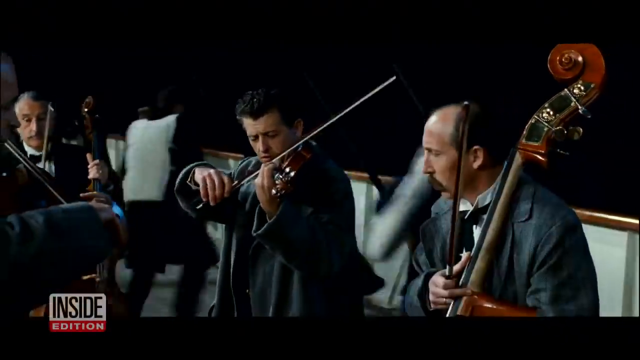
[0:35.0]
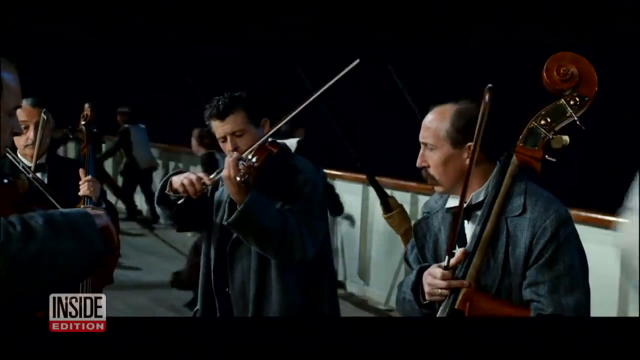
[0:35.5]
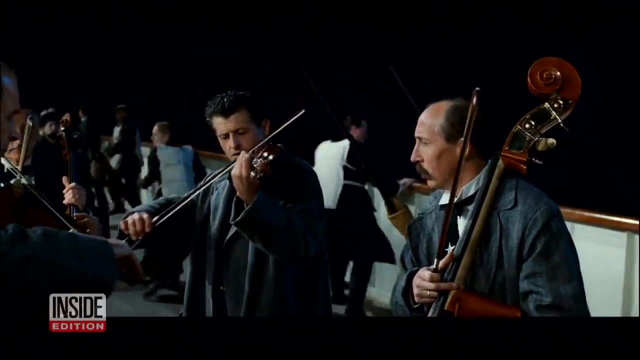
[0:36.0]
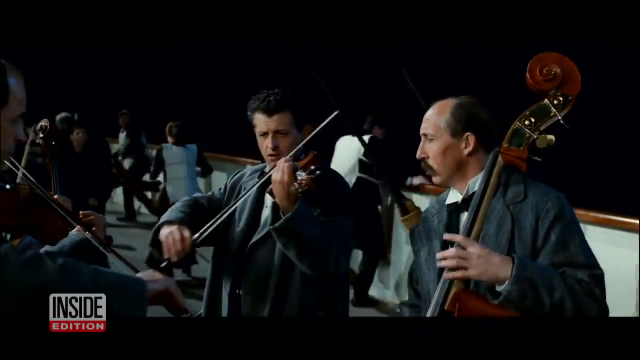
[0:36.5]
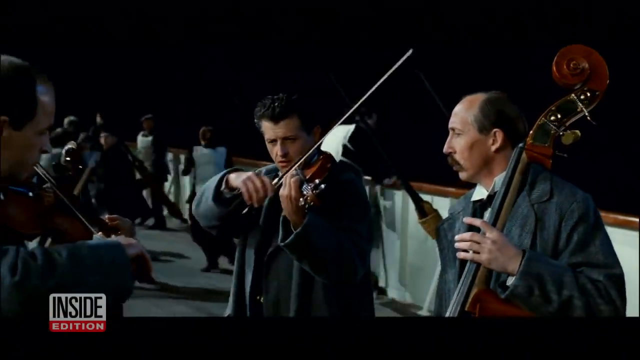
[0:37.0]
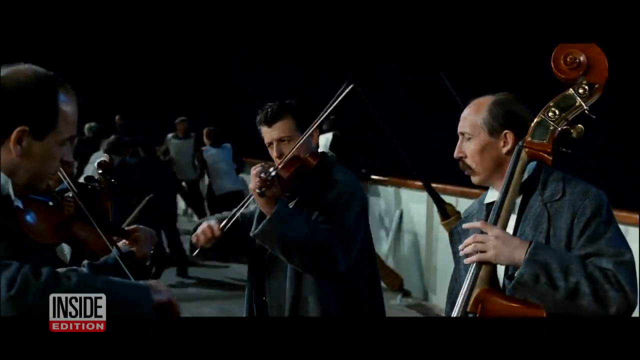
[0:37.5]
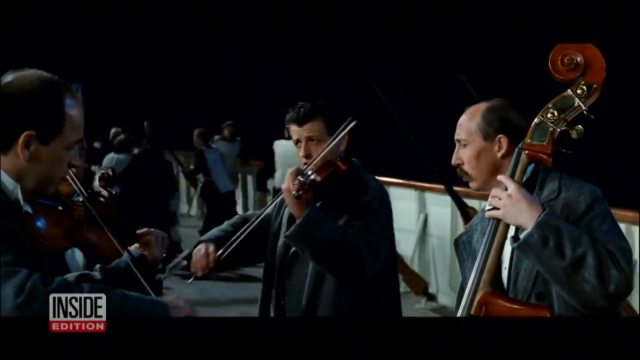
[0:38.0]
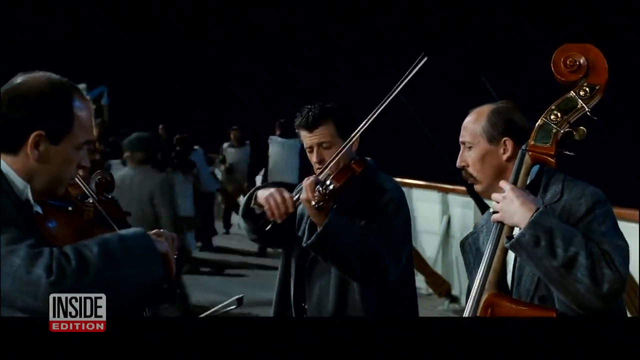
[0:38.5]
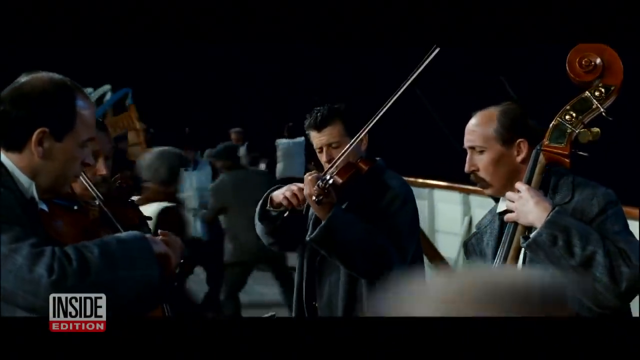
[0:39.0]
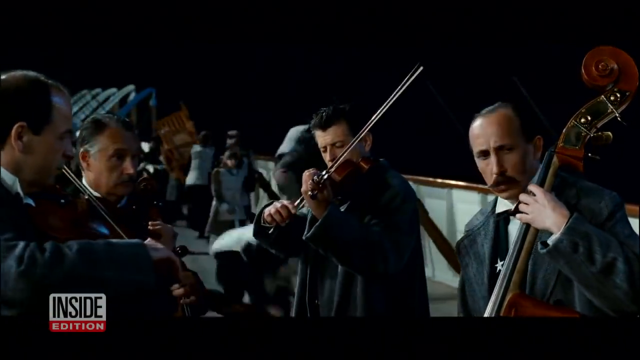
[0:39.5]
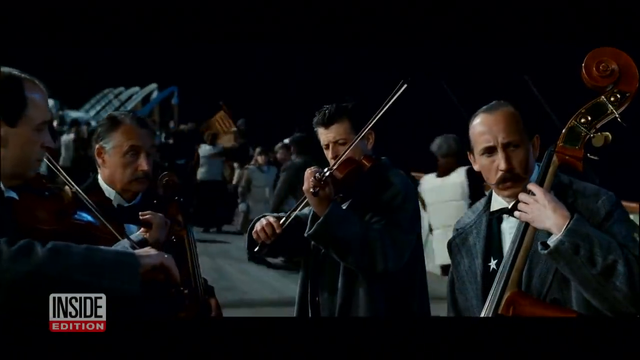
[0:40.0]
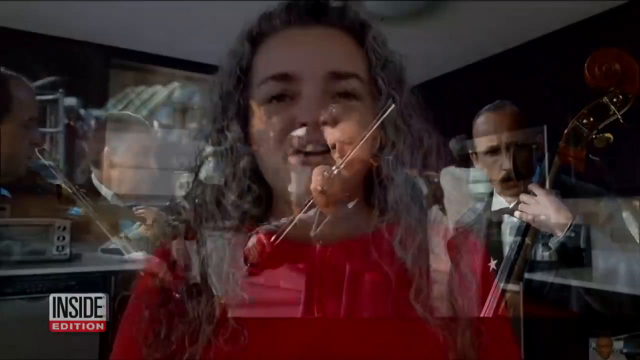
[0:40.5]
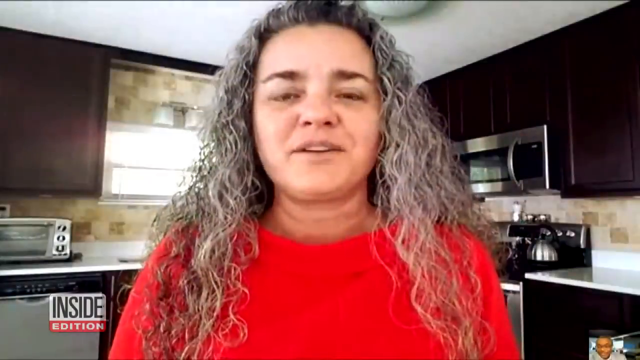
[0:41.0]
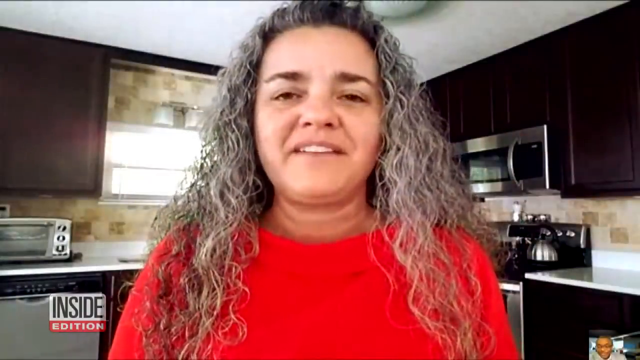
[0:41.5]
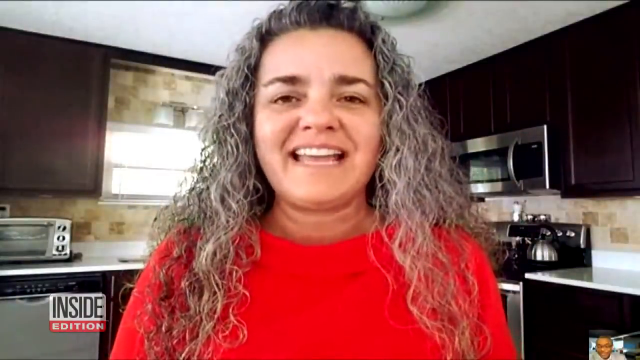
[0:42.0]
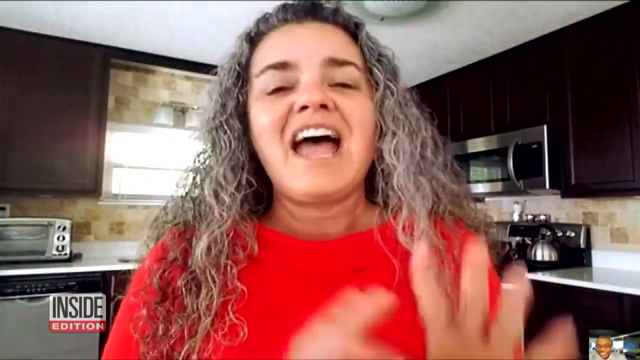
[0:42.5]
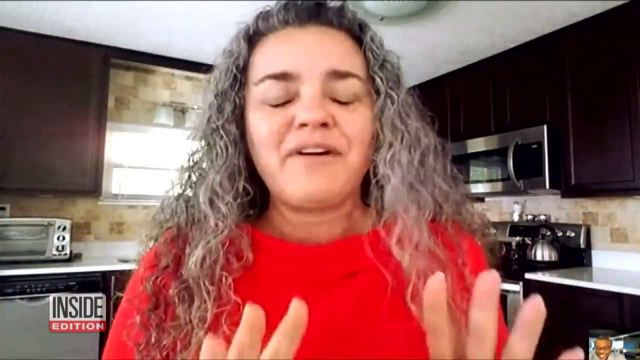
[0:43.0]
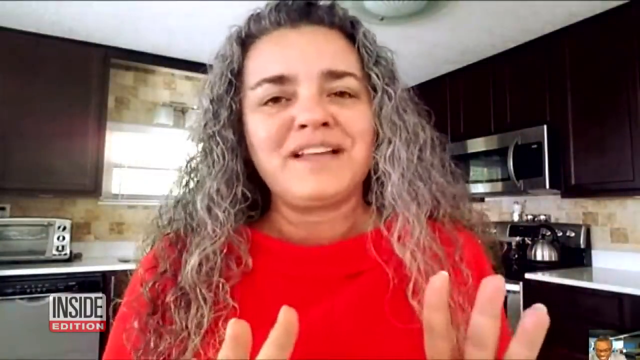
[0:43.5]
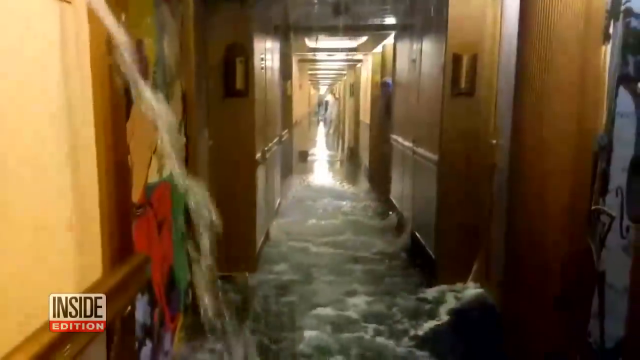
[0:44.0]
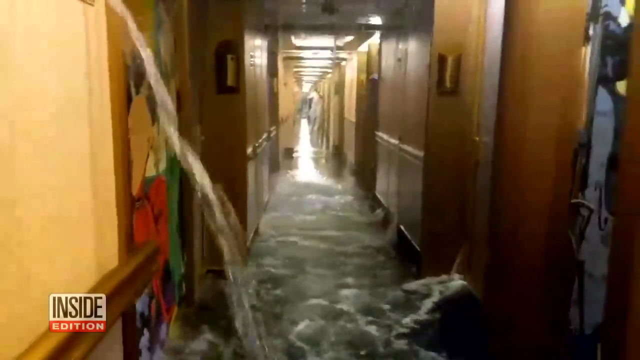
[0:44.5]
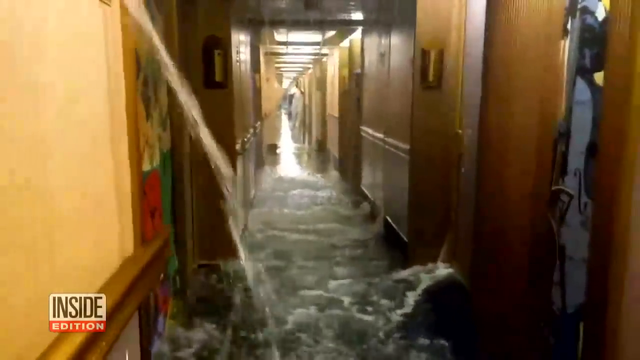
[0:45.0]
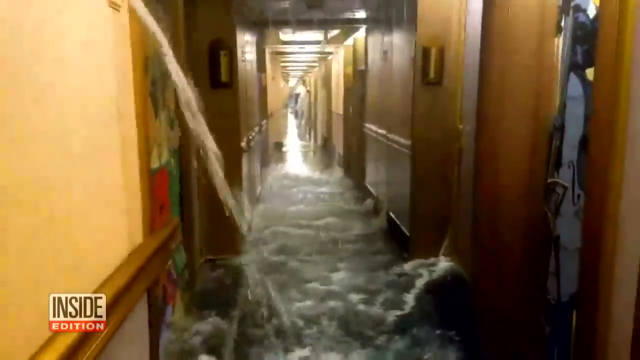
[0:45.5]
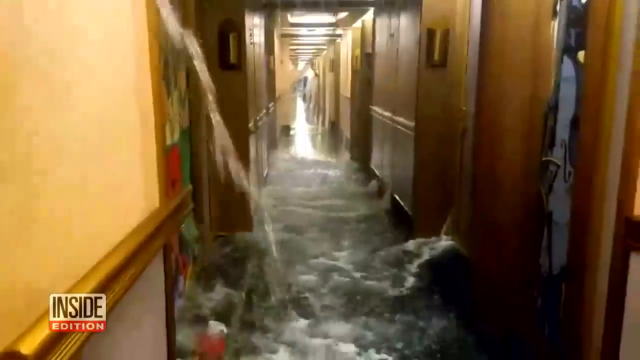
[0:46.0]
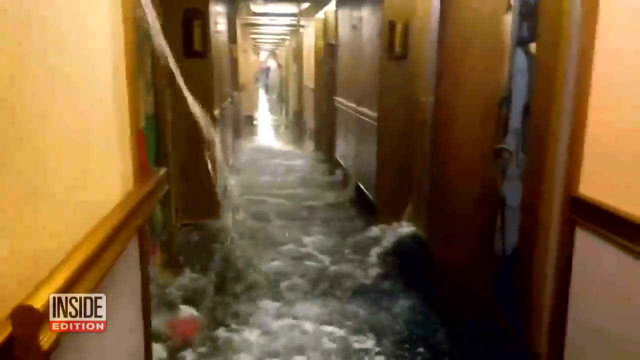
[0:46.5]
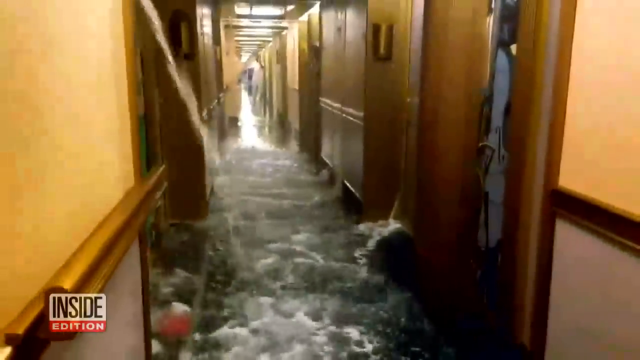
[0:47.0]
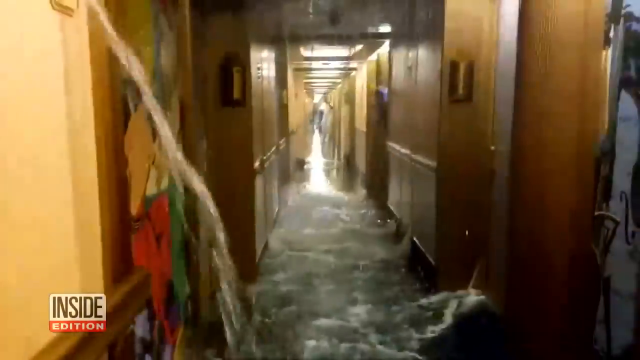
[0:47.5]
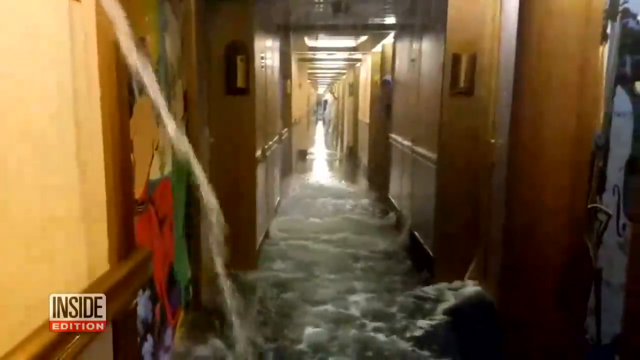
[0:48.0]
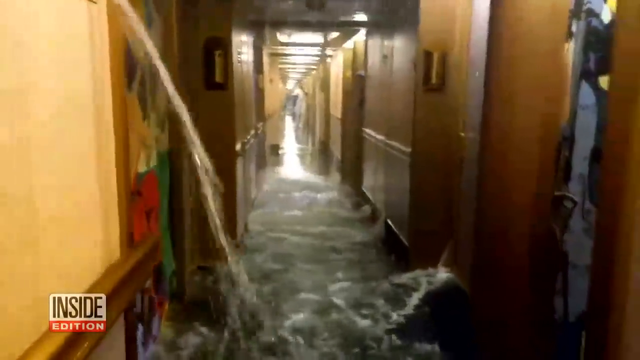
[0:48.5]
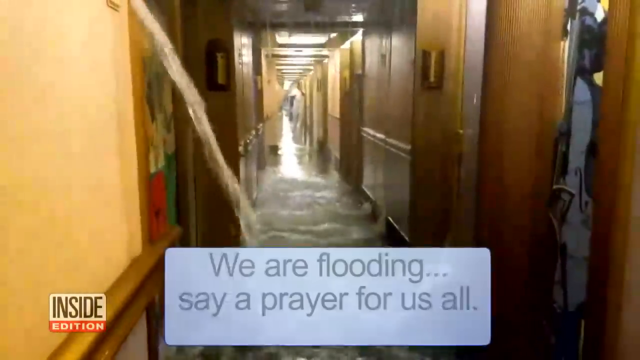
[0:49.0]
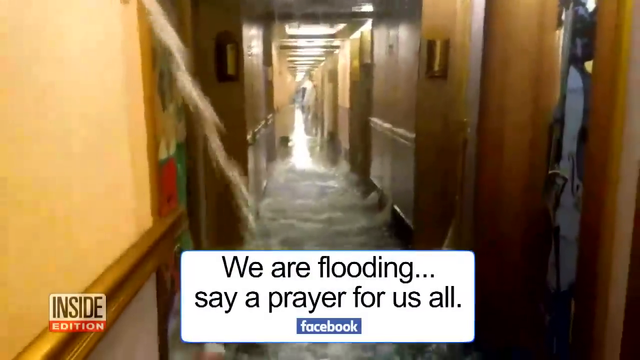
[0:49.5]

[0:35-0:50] More shots show the individuals playing the violin and the actors in the movie Titanic. A woman who appears to be in an interview follows; she wears a red dress and has grayish white curly hair. She appears to be in her kitchen: countertops are visible, along with what appears to be a microwave on the right side of the frame and the countertop of an oven and a dishwasher or electric oven at the far bottom left. The scene then changes back to the hallway from the opening, which is being flooded, with a subtitle at the bottom reading "we are flooding, say prayer for us". The hallway continues to flood. There appear to be no individuals in the shot, though some lights are visible at the very top of the frame.